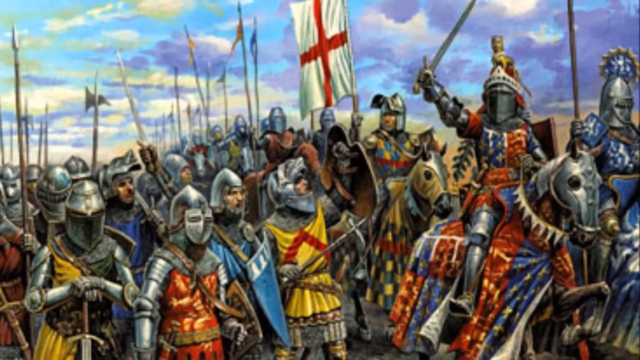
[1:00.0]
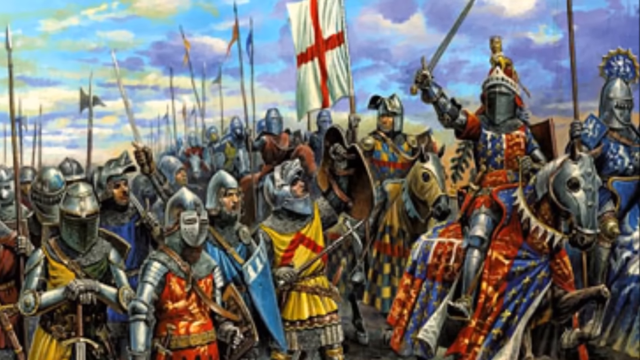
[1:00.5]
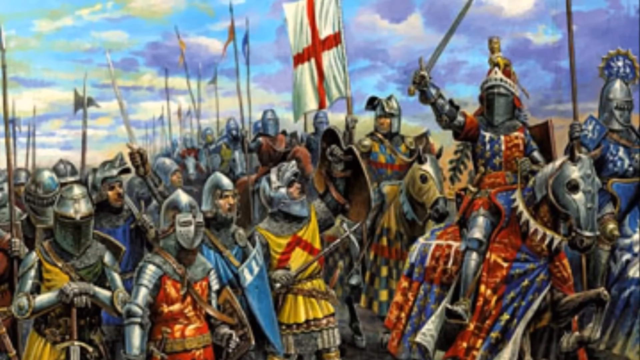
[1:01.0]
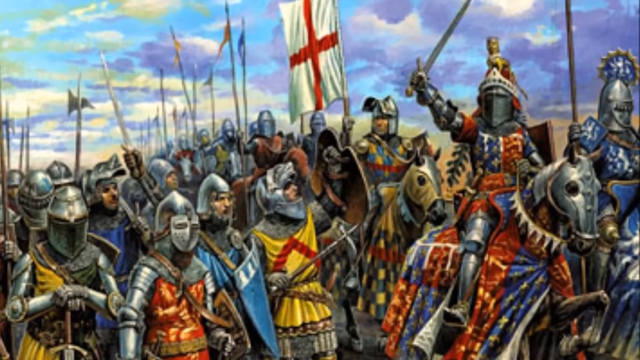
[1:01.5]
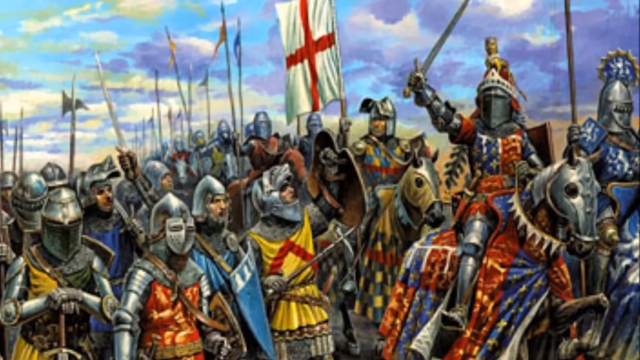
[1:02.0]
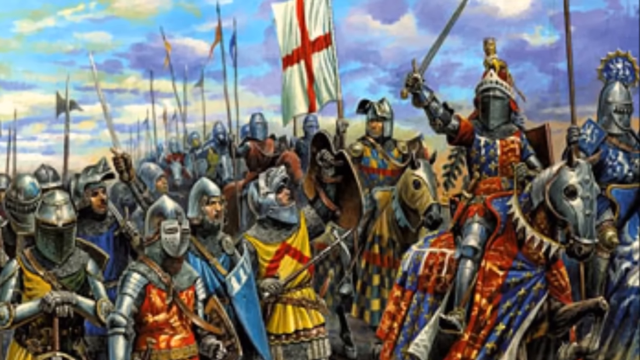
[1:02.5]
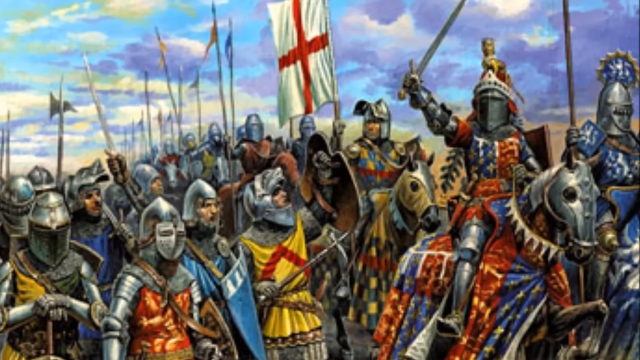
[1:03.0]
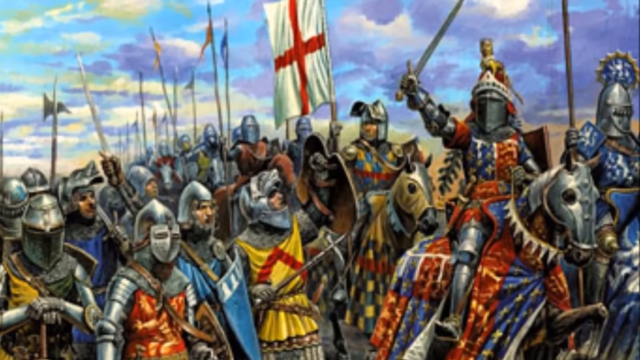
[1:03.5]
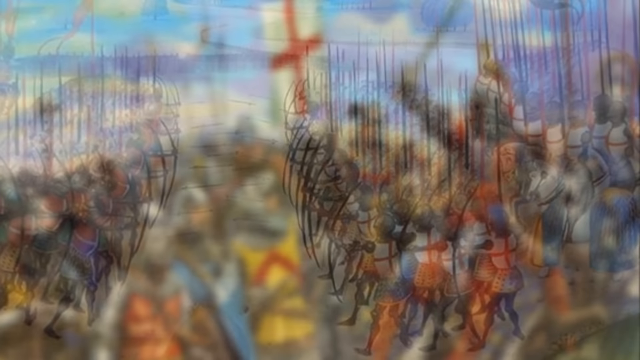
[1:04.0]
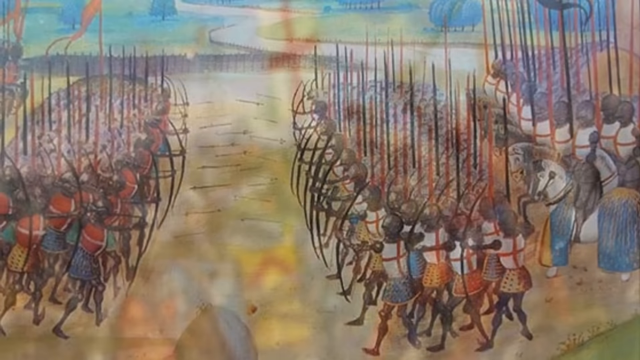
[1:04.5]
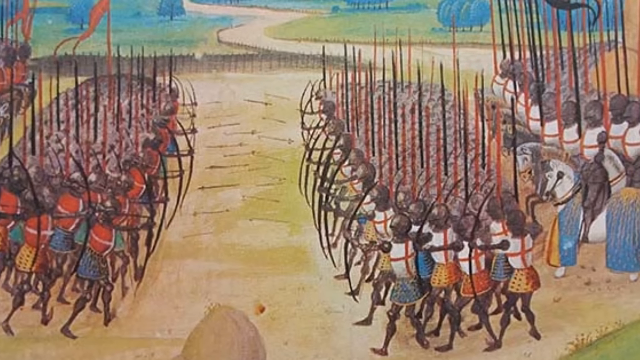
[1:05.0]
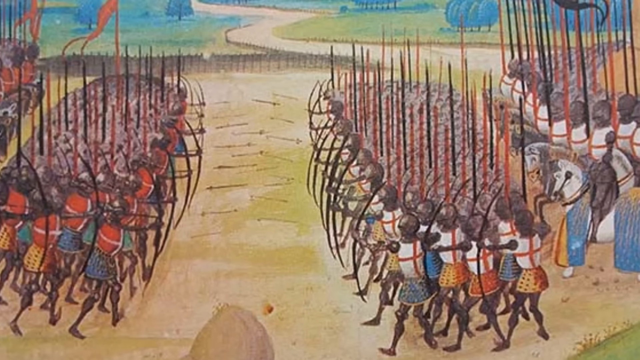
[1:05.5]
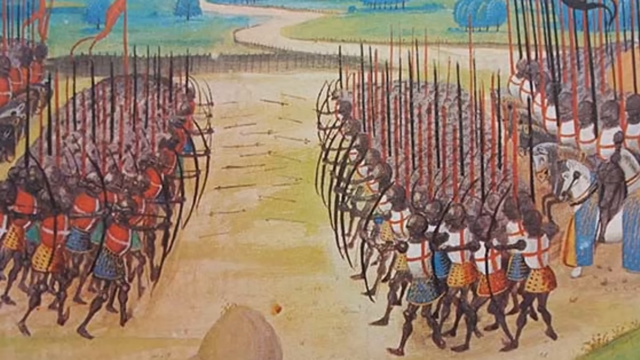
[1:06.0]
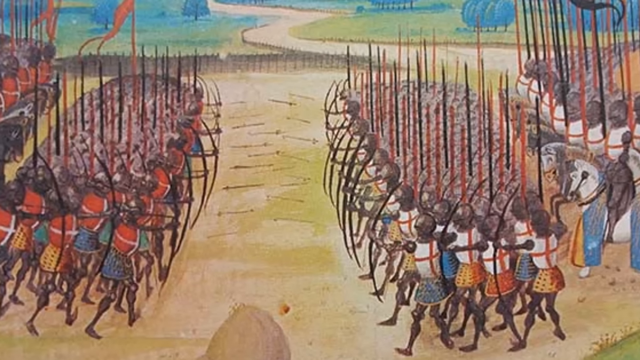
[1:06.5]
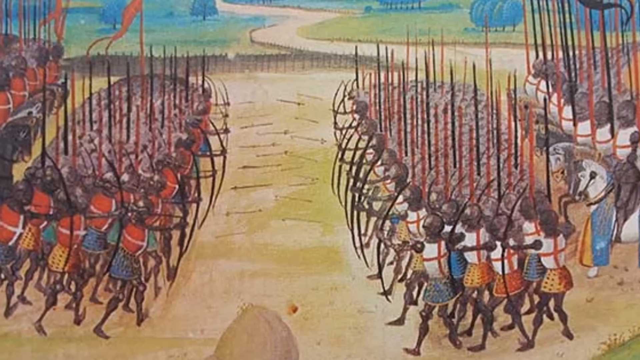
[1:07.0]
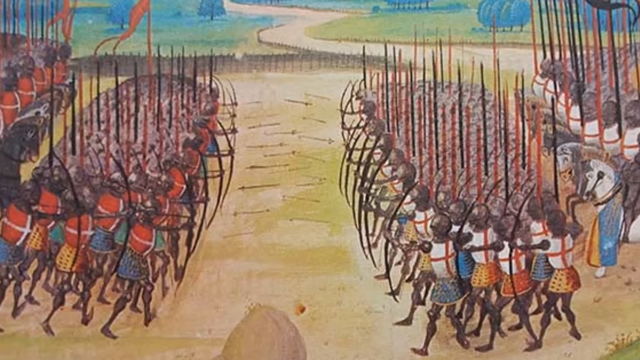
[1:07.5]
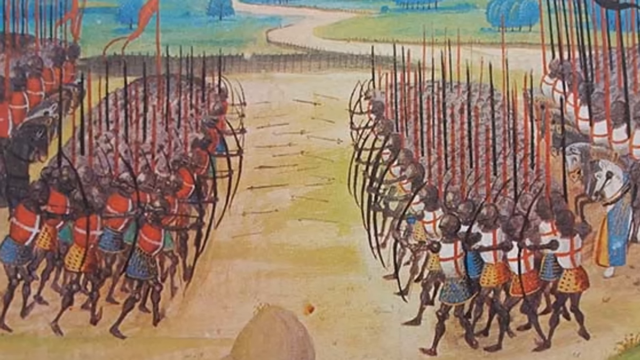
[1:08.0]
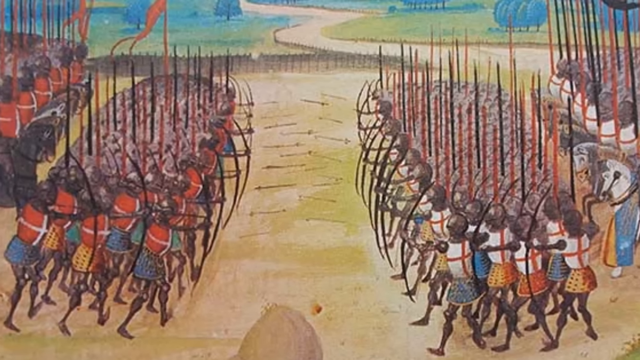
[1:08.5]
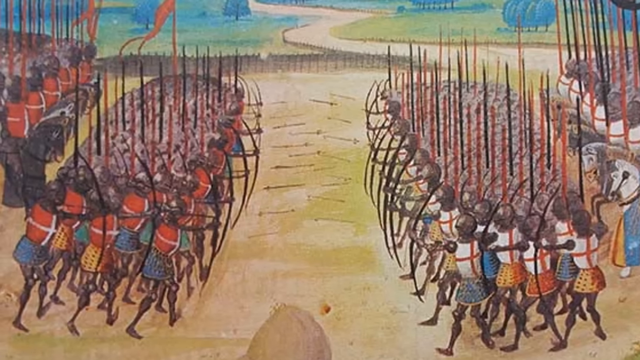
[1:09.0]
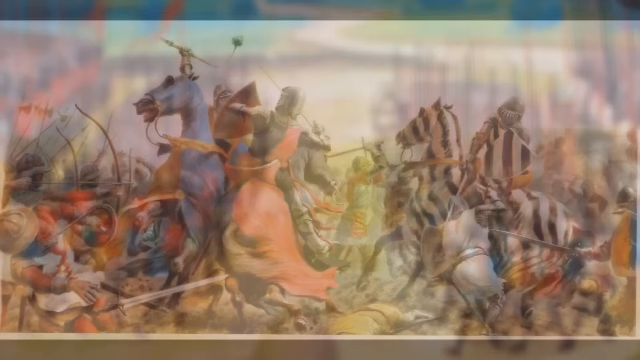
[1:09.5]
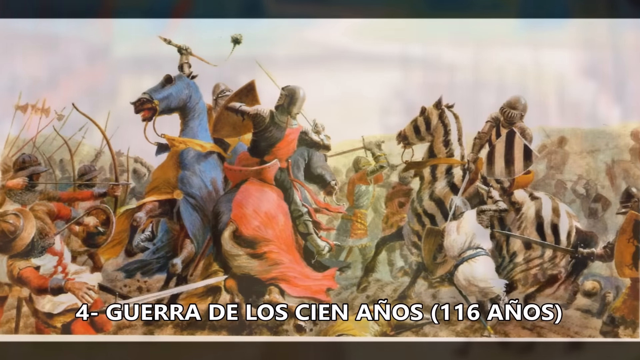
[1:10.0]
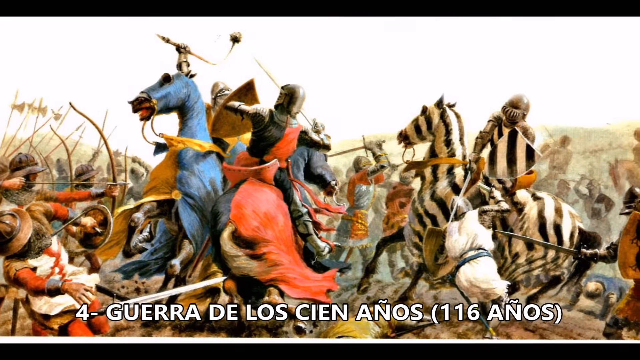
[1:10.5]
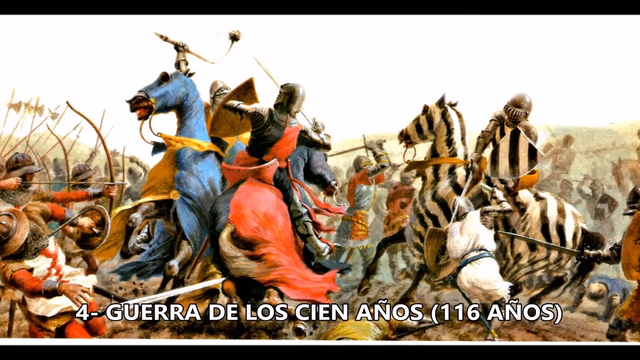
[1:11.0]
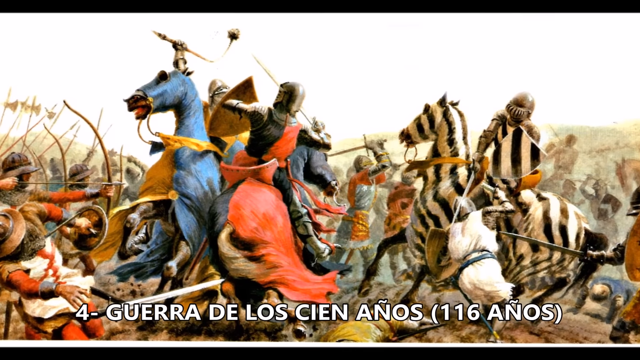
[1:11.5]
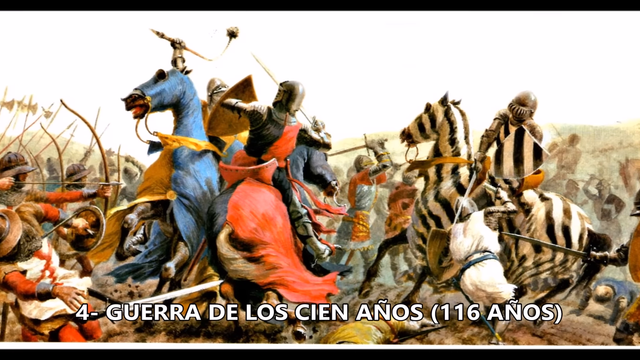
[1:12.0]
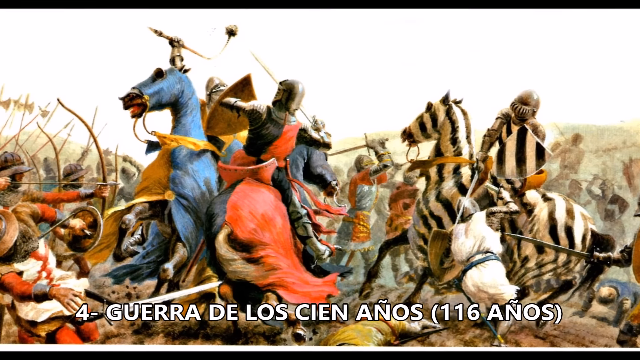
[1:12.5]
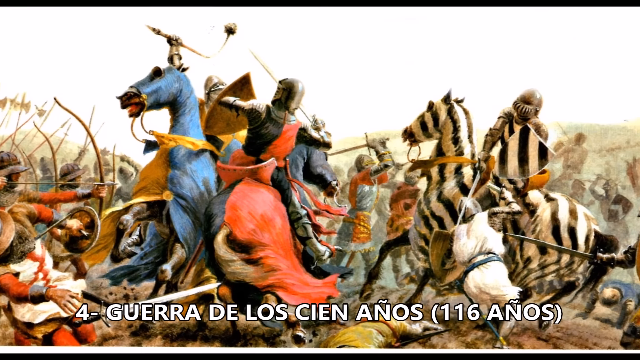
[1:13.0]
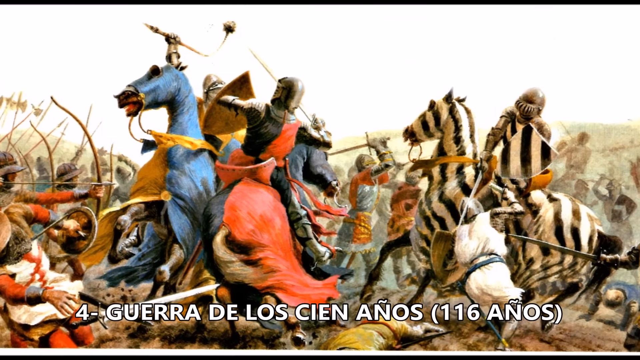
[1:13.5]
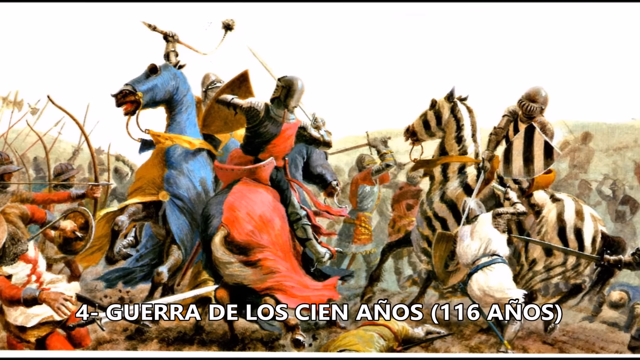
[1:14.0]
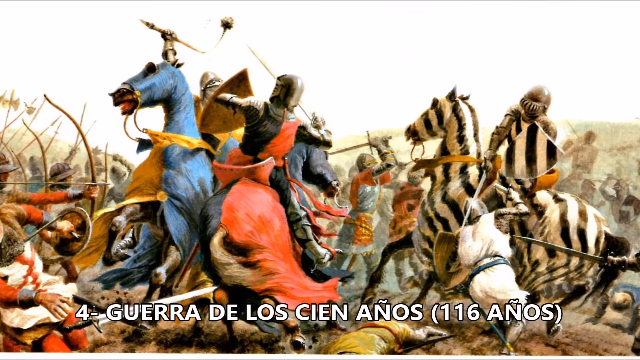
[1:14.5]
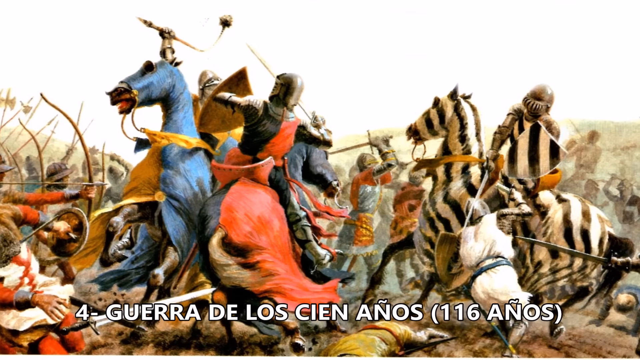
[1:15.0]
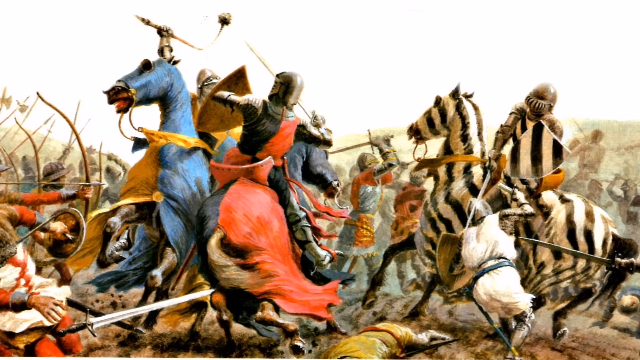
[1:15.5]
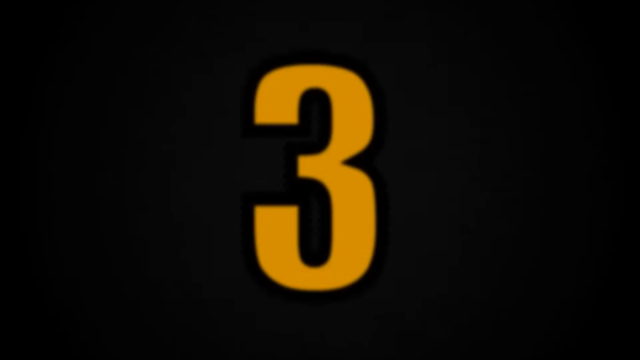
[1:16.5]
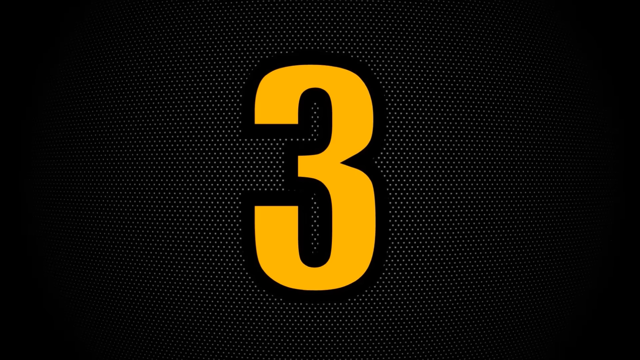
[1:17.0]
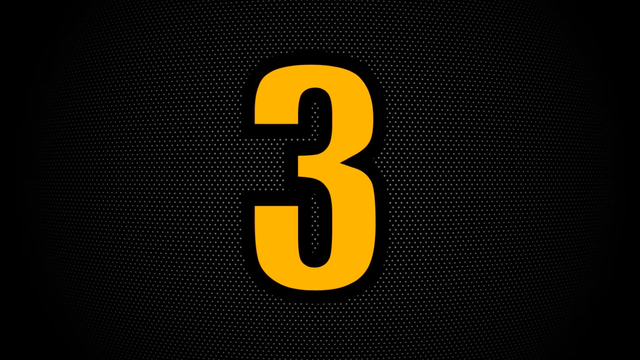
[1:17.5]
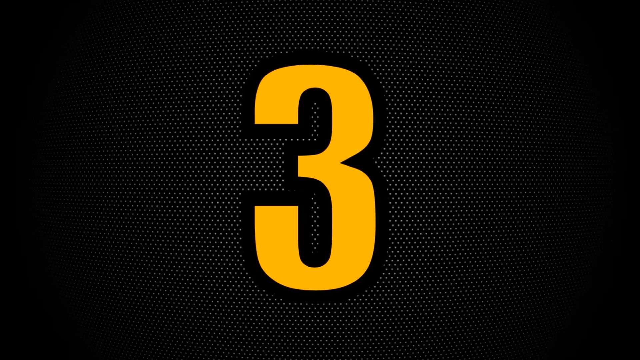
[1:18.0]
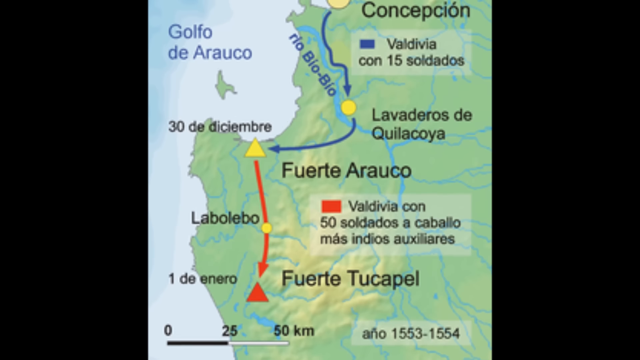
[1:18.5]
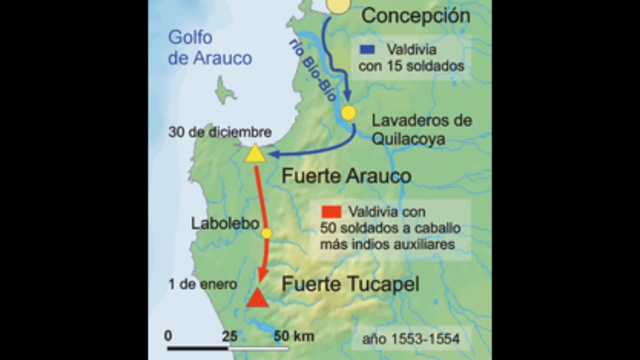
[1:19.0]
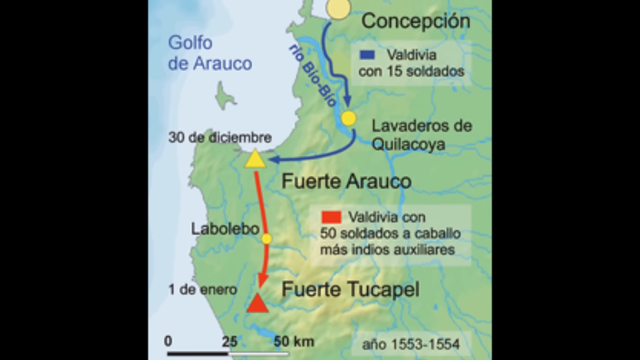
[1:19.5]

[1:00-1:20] An image shows an English army of the Hundred Years' War fighting in France in the 15th century. All the troops are heavily armoured, and on the right-hand side they fight under the banner of Saint George. A group of knights appears to be led by a member of the royal family, who has the blue and red royal colours on both his own armour and his horse's armour. He waves his sword to encourage his troops walking alongside, who are armed with swords and spears and wear a variety of helmets.